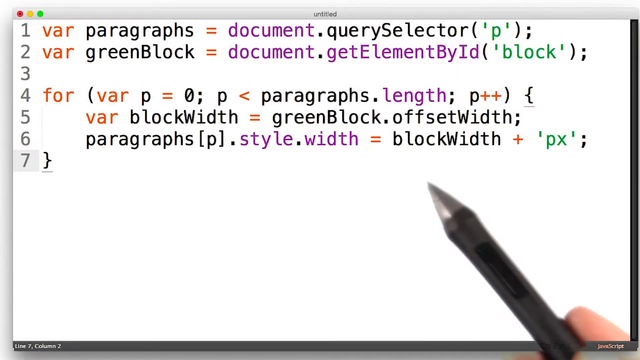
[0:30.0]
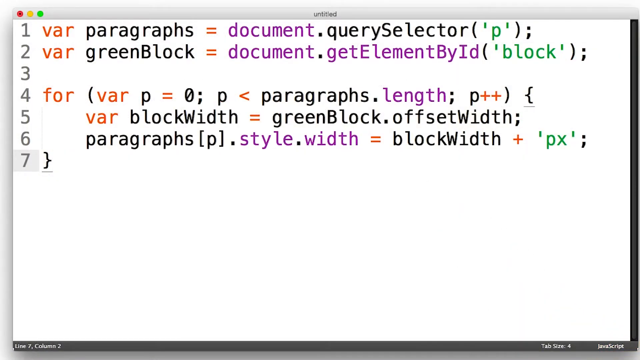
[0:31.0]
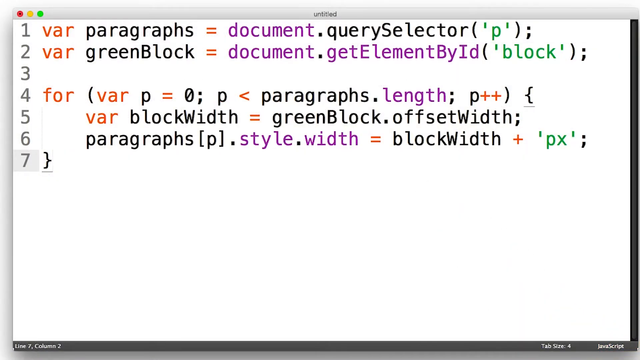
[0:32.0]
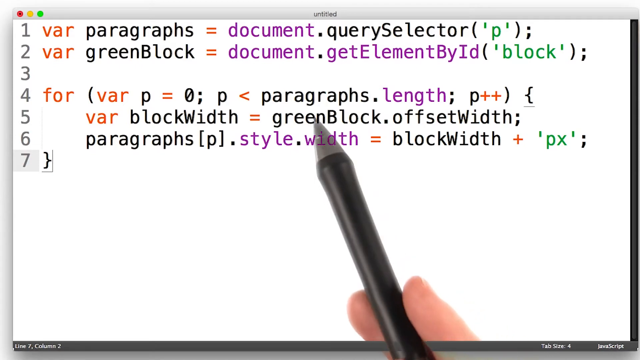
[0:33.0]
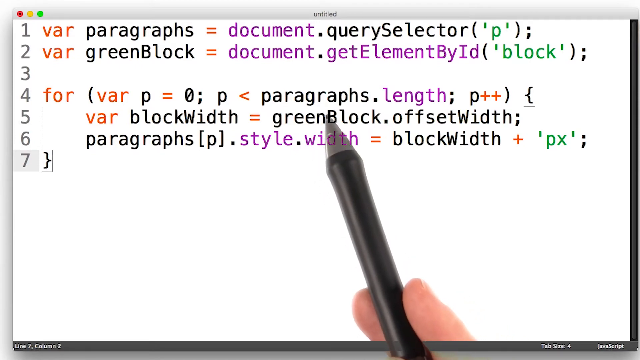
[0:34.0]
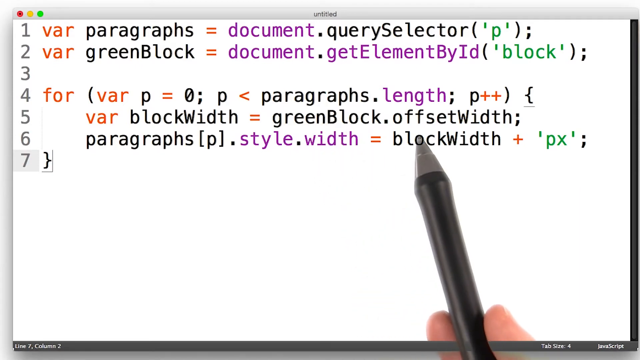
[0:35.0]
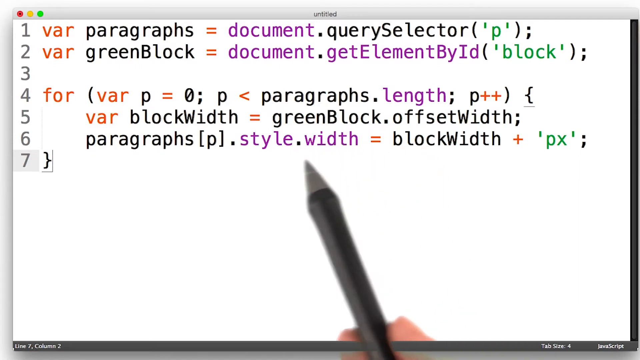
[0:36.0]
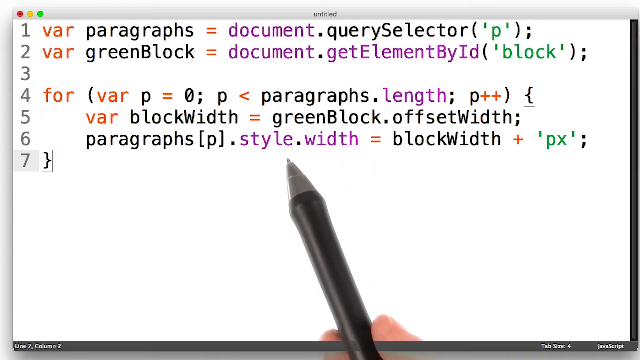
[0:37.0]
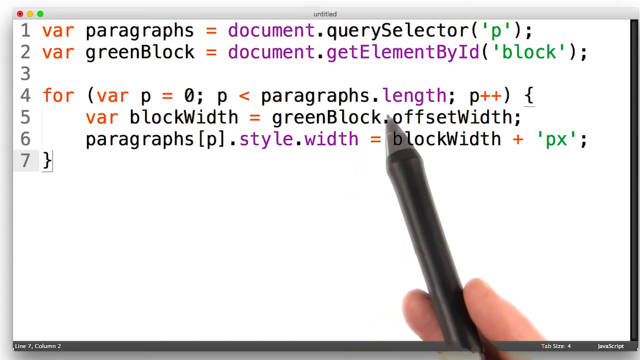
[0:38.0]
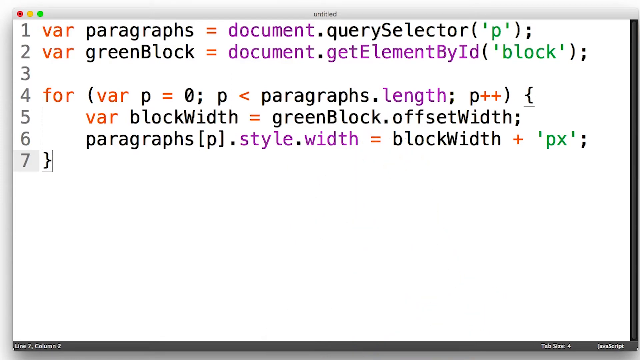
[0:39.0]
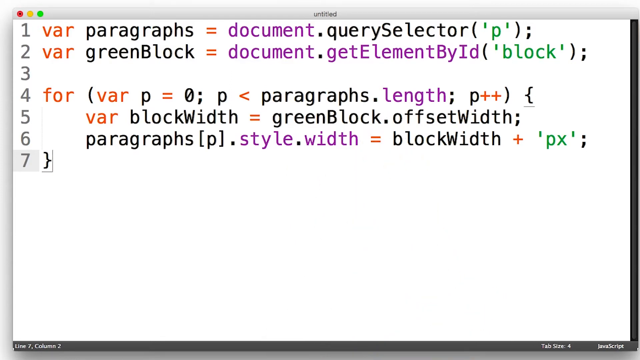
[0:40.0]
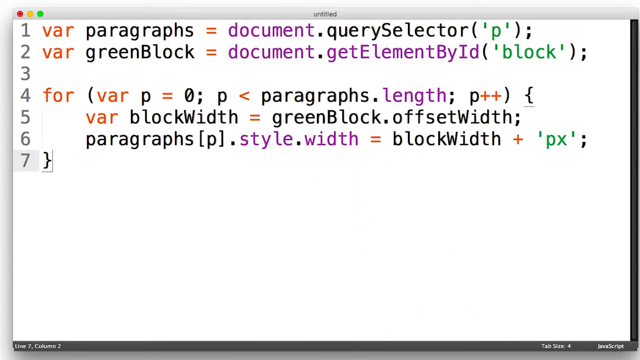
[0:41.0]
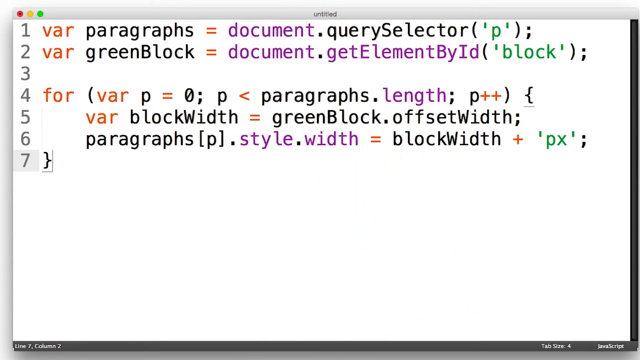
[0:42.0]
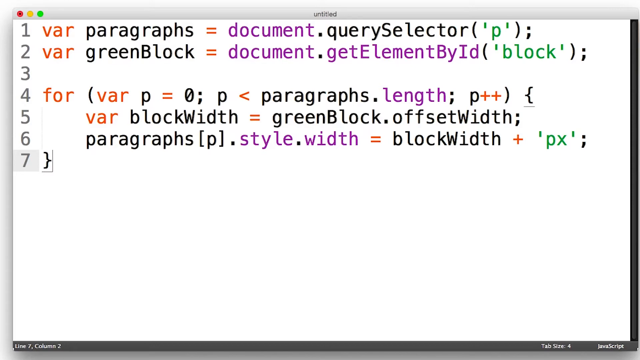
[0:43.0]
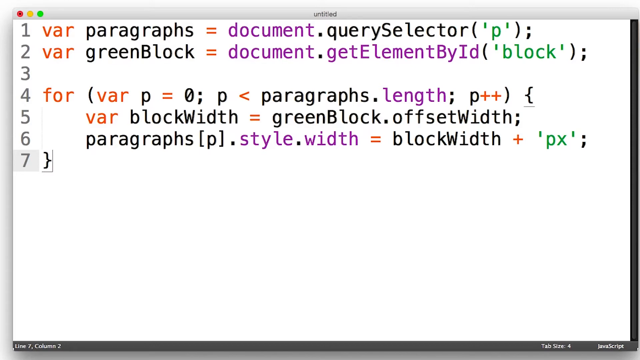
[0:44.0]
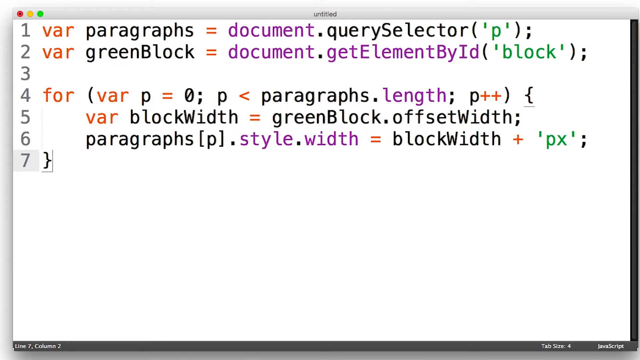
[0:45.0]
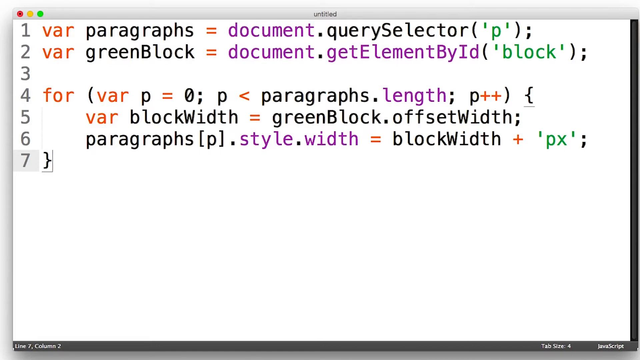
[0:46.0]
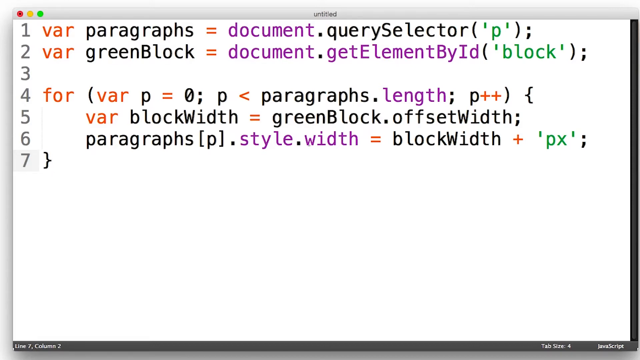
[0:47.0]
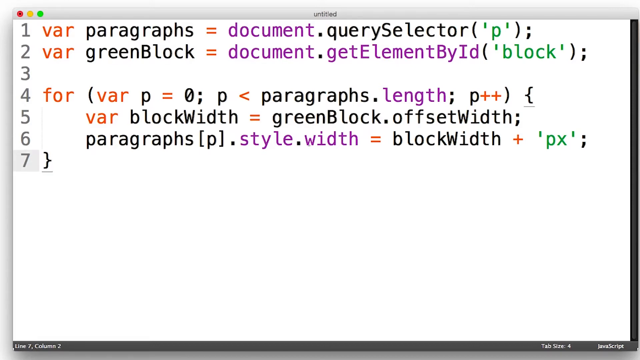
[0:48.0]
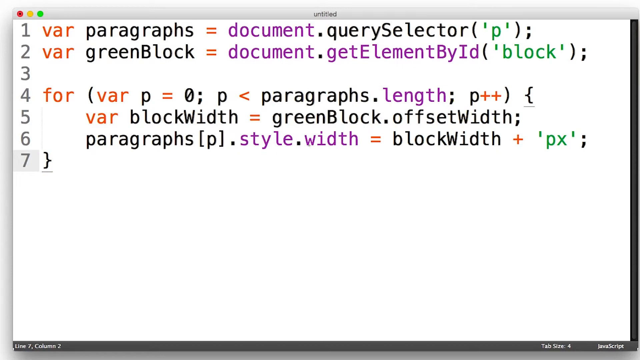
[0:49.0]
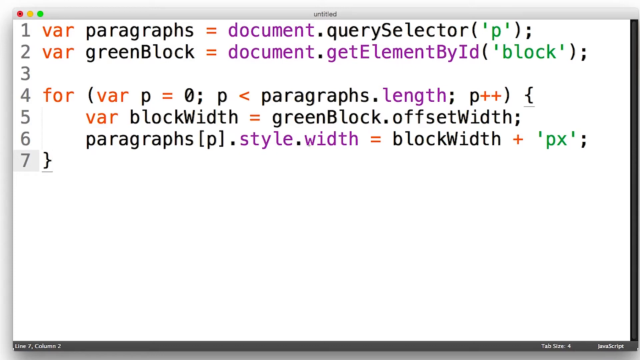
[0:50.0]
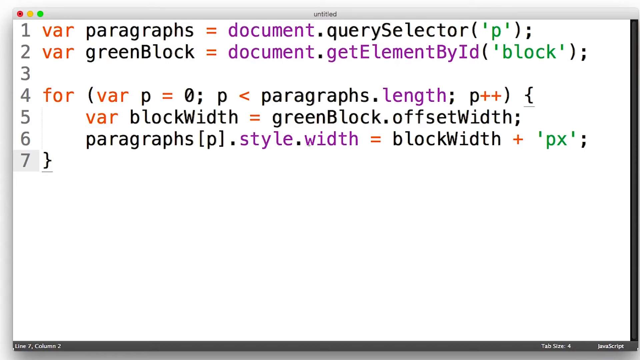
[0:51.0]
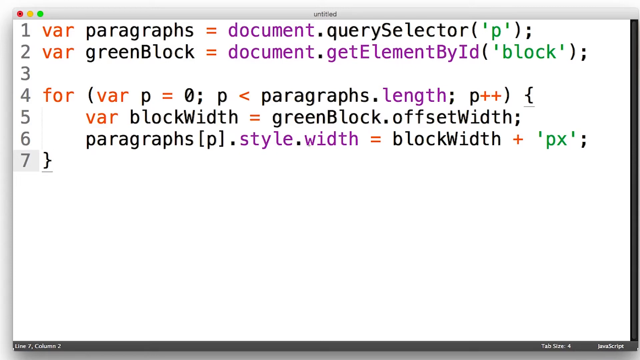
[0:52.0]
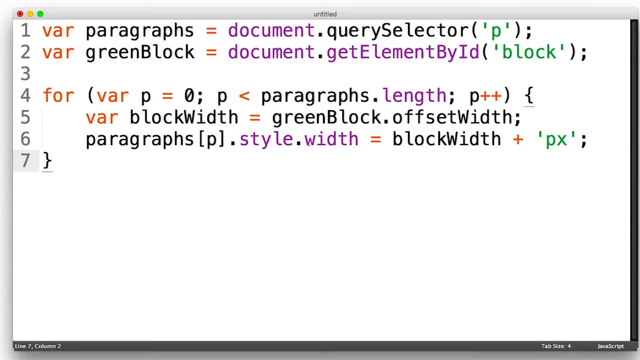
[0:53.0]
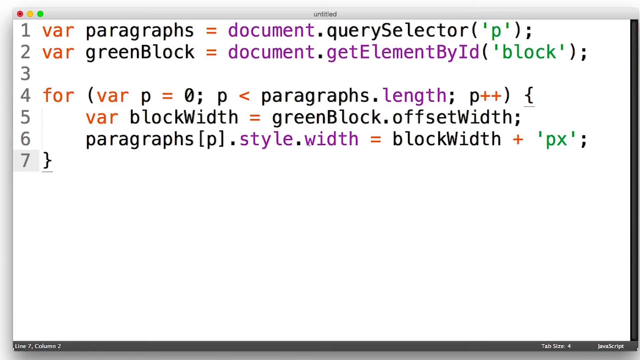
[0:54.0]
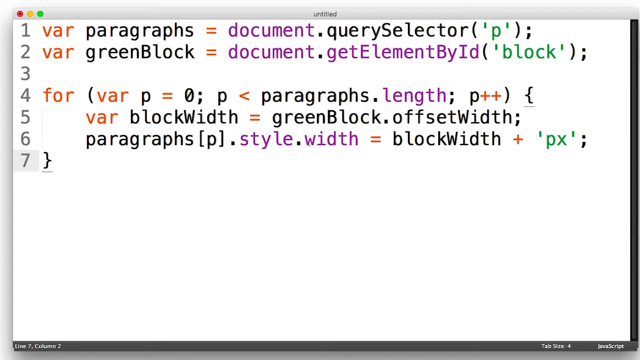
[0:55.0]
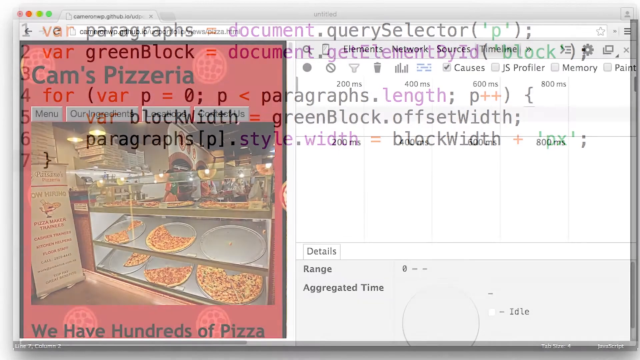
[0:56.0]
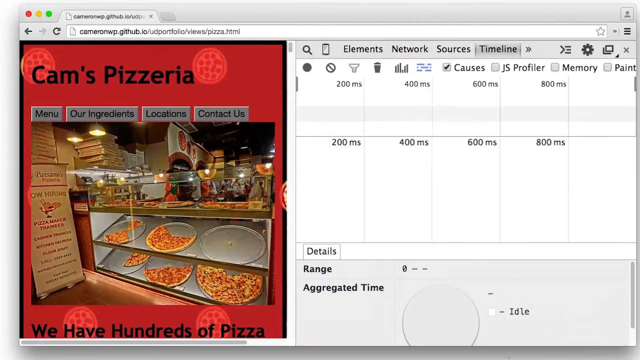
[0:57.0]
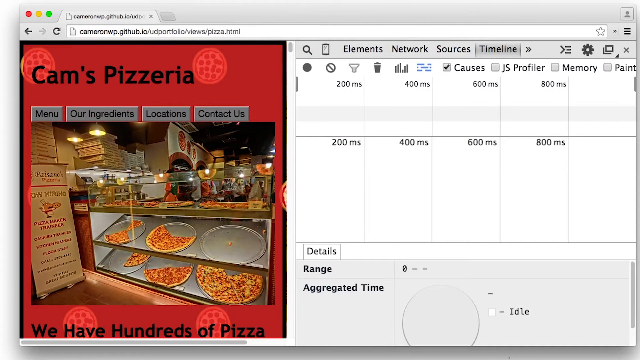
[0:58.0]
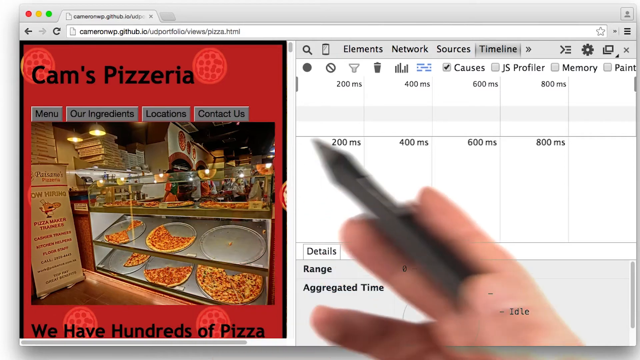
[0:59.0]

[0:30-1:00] A block of code is on screen, dealing with paragraphs and green blocks, with a for loop that sets a new variable, block width, to the green block offset width. The paragraphs variable, set to the document query selector, is used to set the paragraphs style.width to the block width with some pixel offset. The presenter points at green blocks, then points at block width on the very last line, where it is used to set paragraphs. The code stays on screen for a while. Then a website loads that says "Cam's Pizzeria," showing an image of a pizza restaurant with pizza in the displays. Above it are the menu options "menu," "our ingredients," "locations" and "contact us." The browser debugger is open on the right.